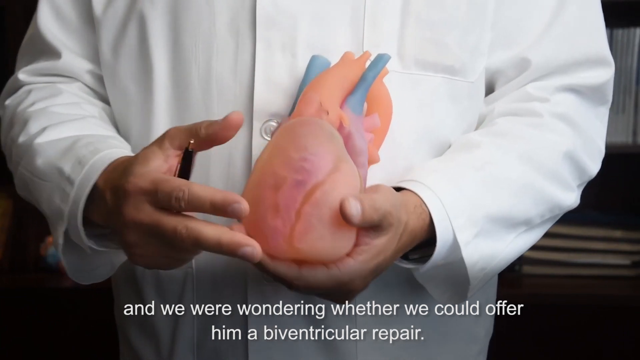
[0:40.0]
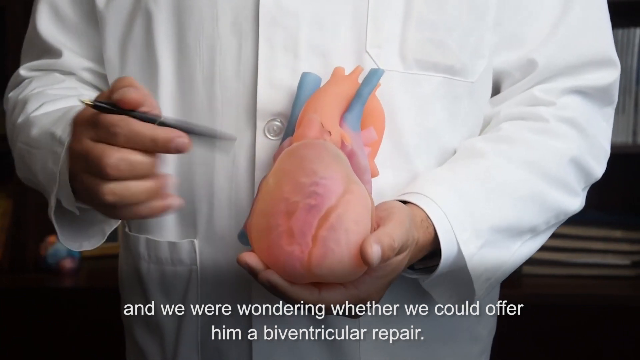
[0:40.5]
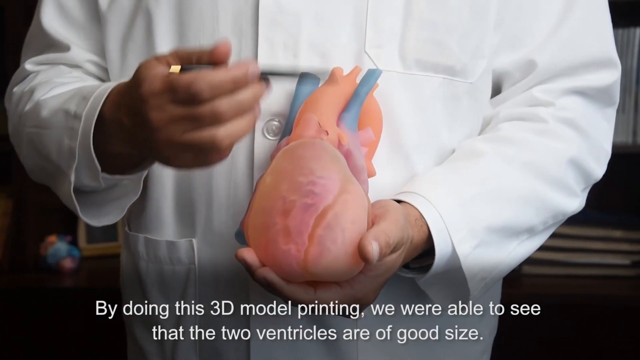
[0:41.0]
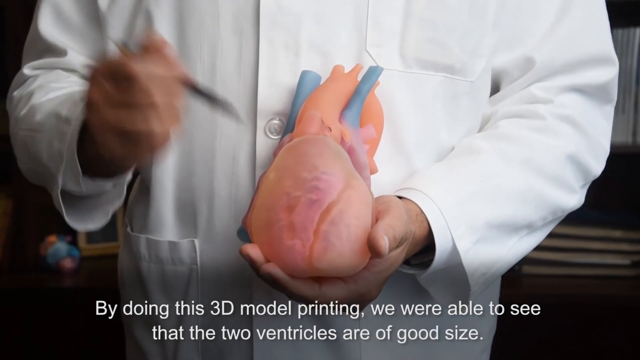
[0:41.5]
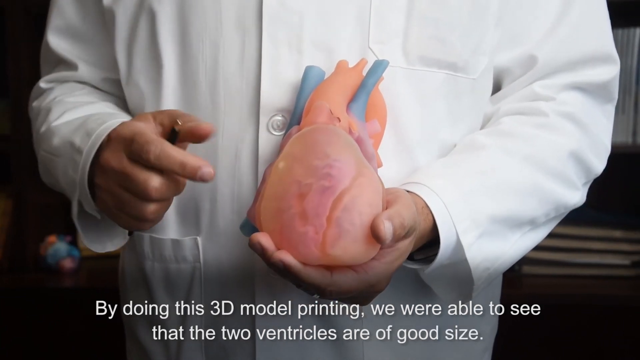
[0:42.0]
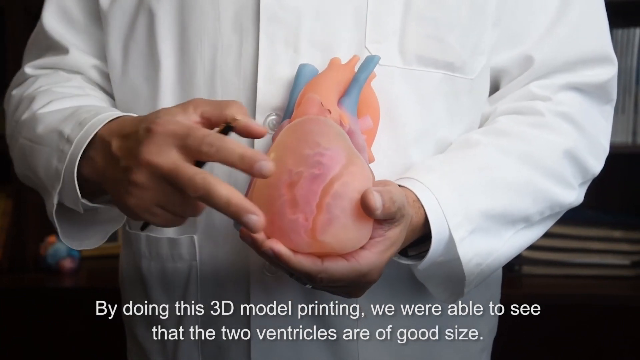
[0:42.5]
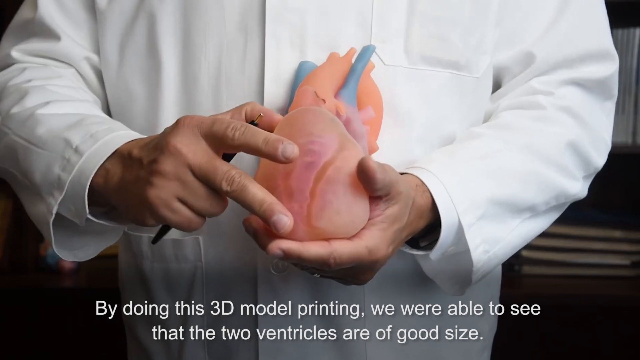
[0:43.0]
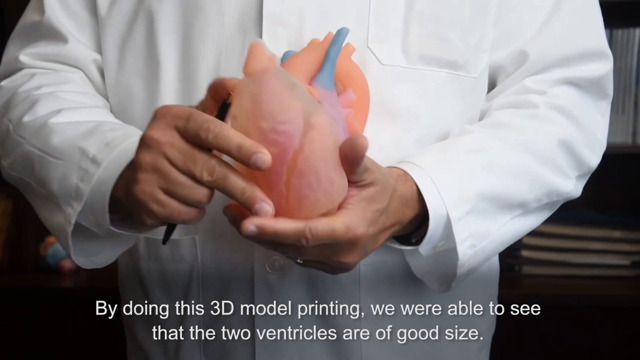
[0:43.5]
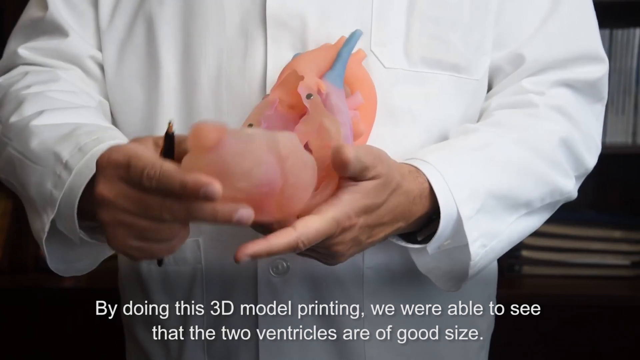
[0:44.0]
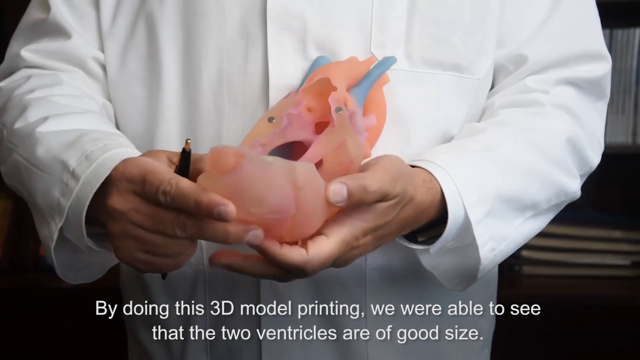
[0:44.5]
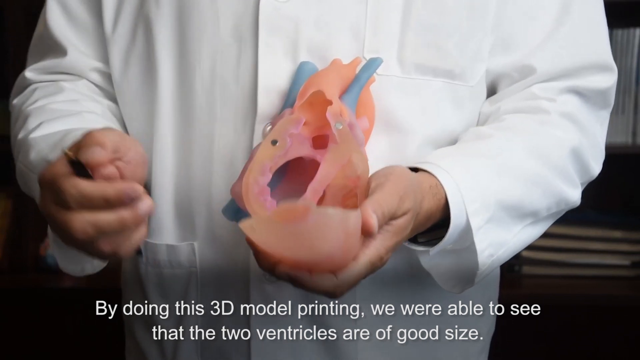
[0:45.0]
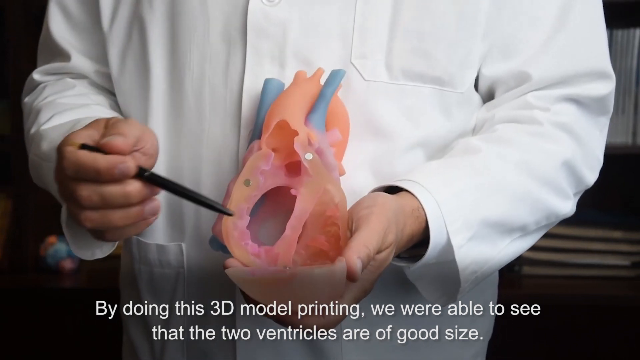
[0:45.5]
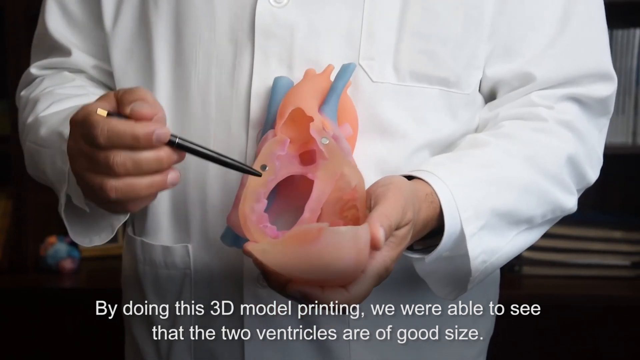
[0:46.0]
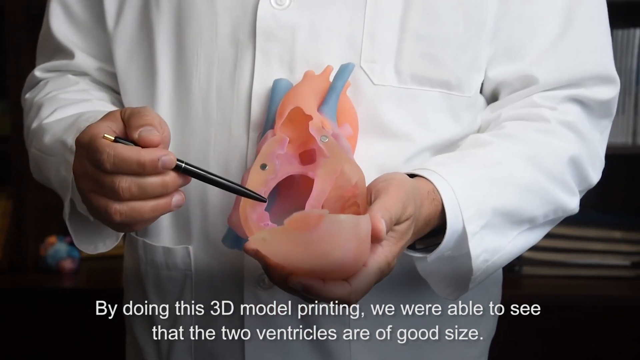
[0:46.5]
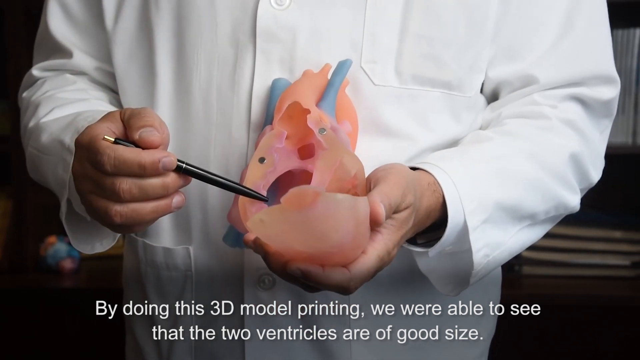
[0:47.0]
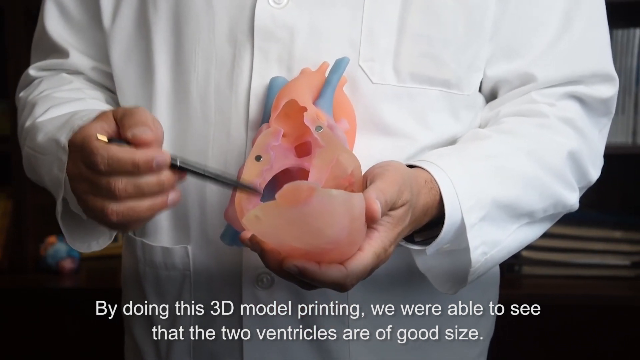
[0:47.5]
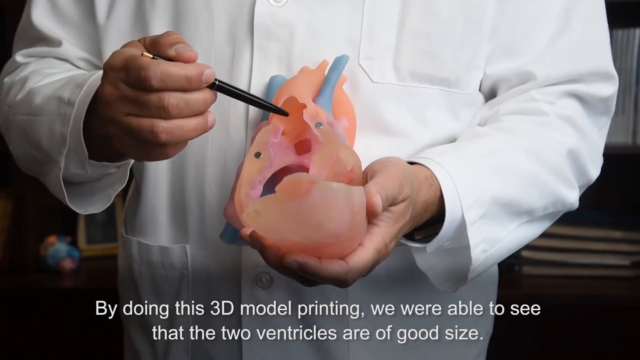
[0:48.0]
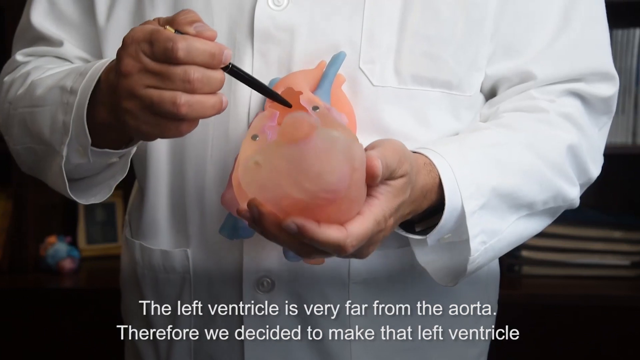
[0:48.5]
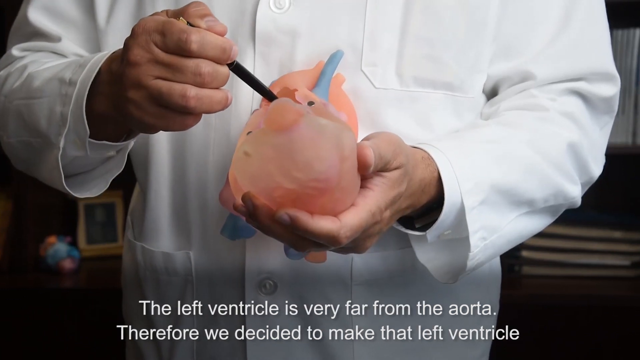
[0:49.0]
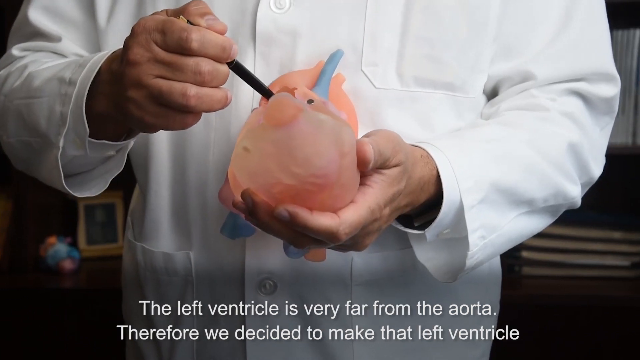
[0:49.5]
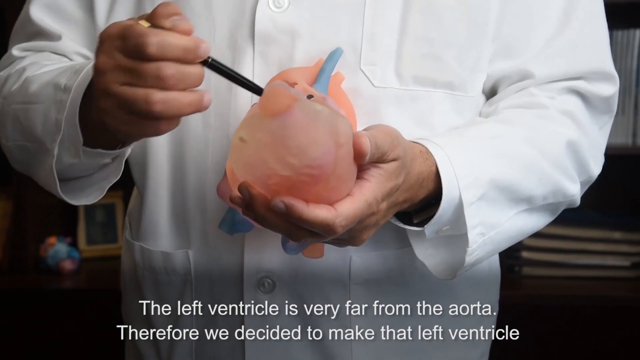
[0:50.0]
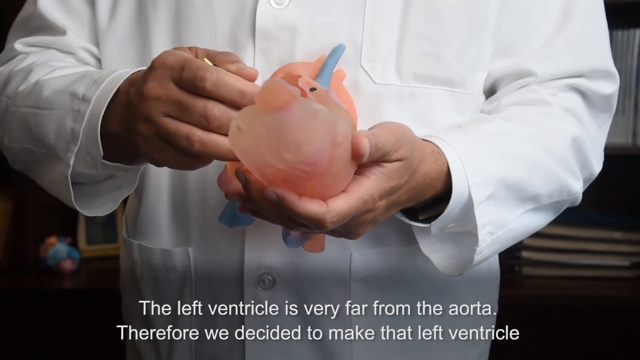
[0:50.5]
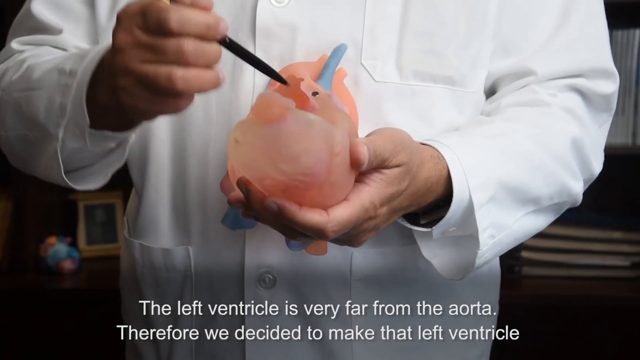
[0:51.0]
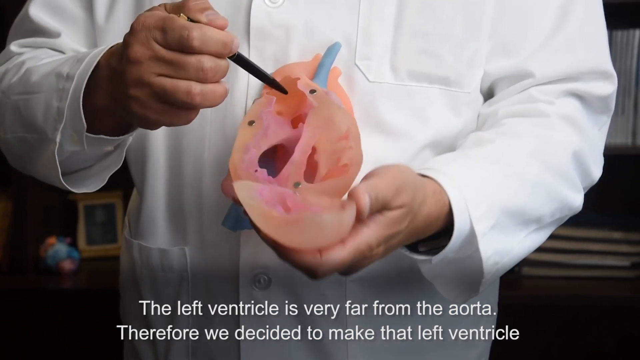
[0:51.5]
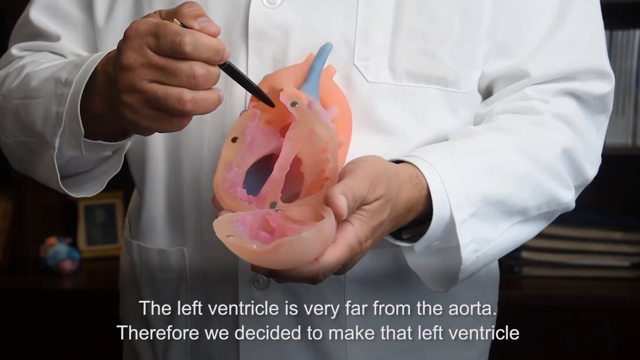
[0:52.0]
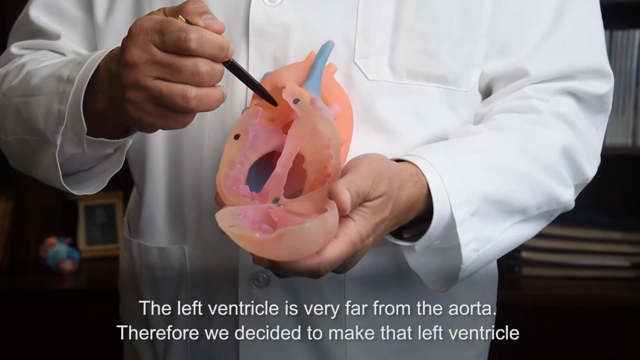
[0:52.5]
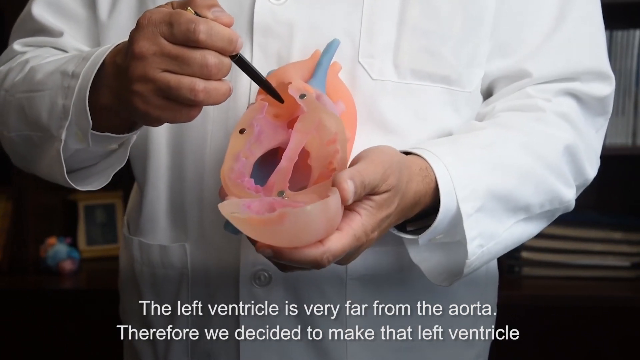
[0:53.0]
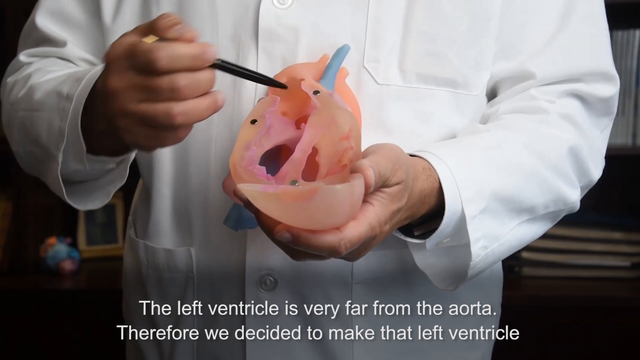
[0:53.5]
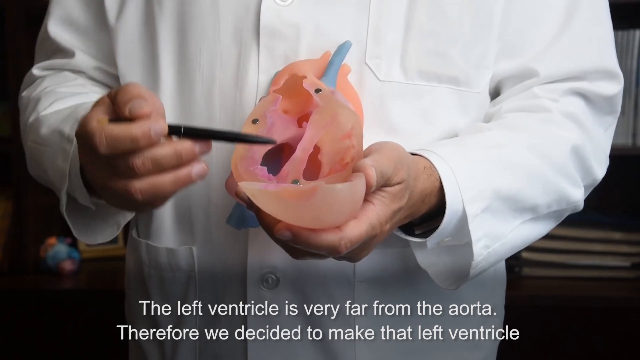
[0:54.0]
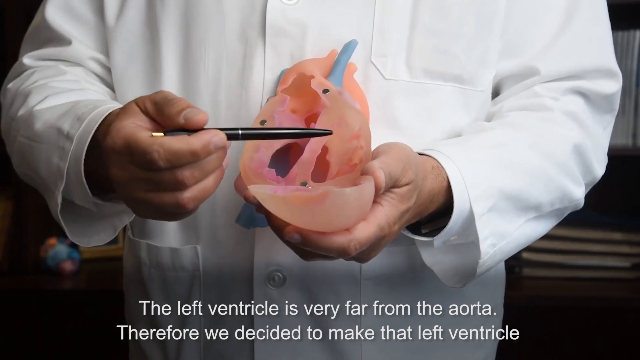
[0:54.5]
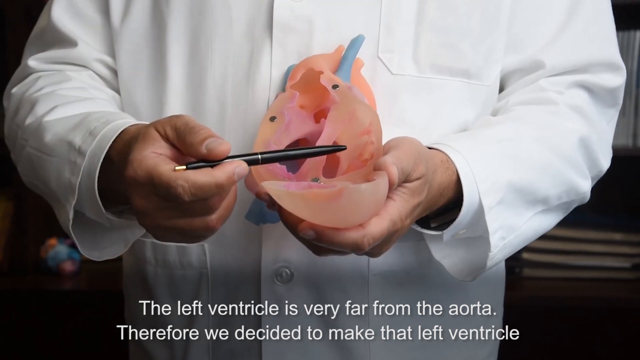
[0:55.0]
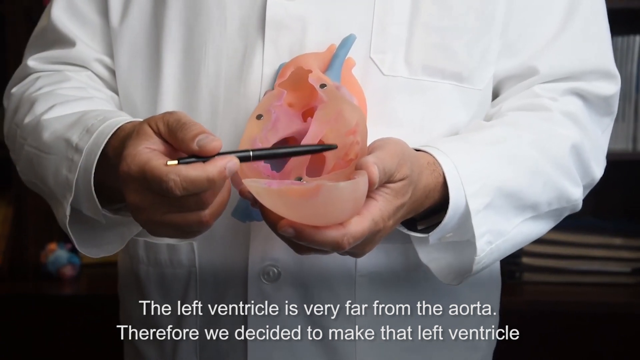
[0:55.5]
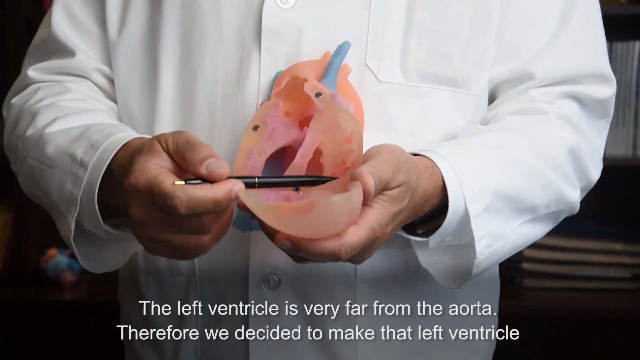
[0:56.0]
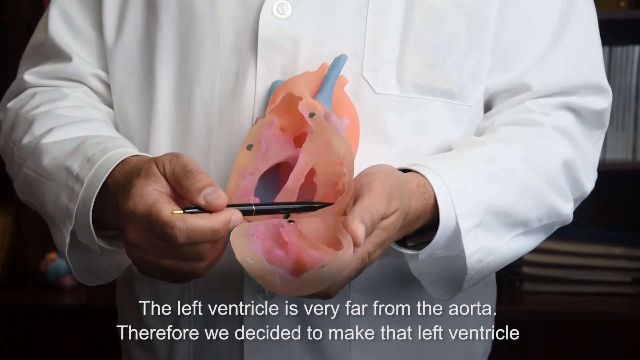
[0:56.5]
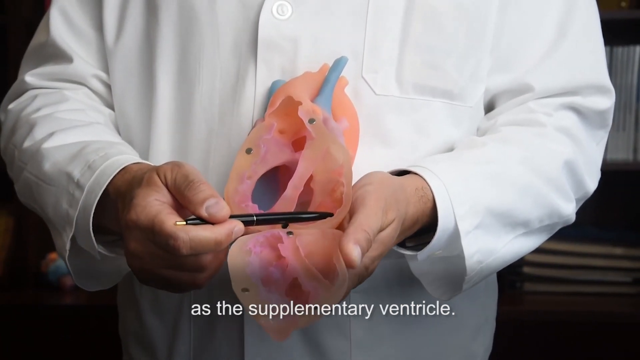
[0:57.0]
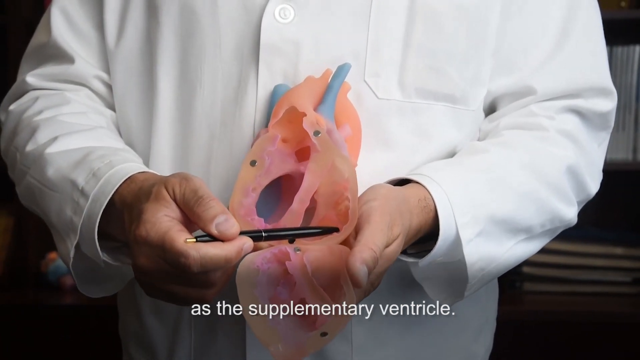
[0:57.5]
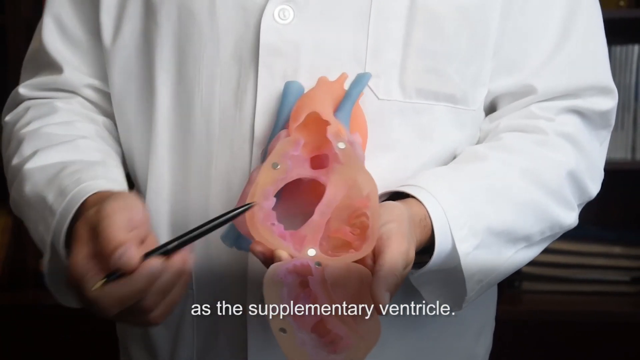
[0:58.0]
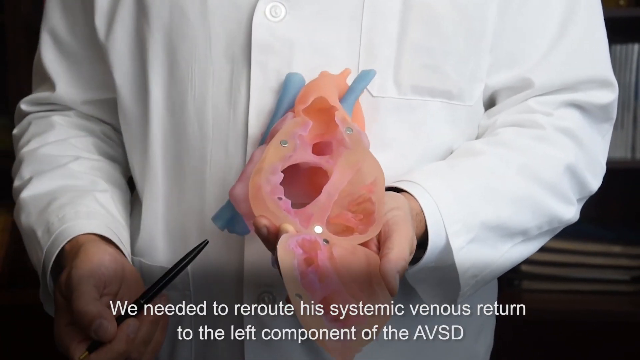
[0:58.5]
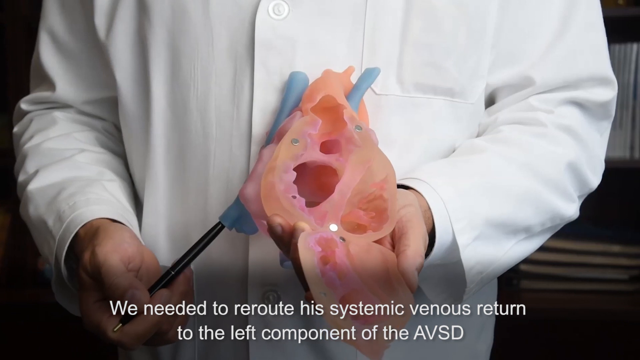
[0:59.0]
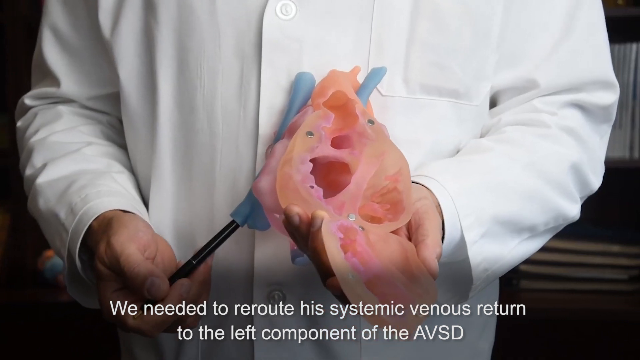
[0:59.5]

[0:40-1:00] The video describes using 3D model printing to see whether the two ventricles are good. The left ventricle is far away, so the decision is made to make the left ventricle supplementary and to reroute the blood.